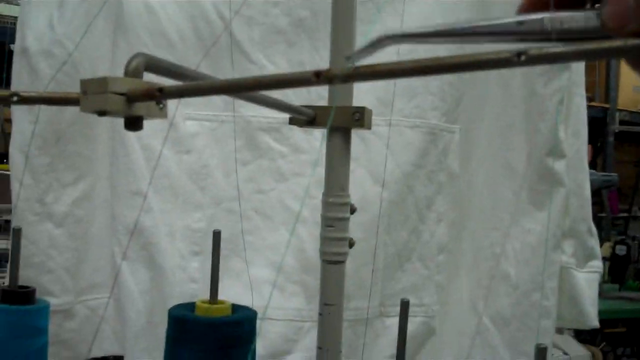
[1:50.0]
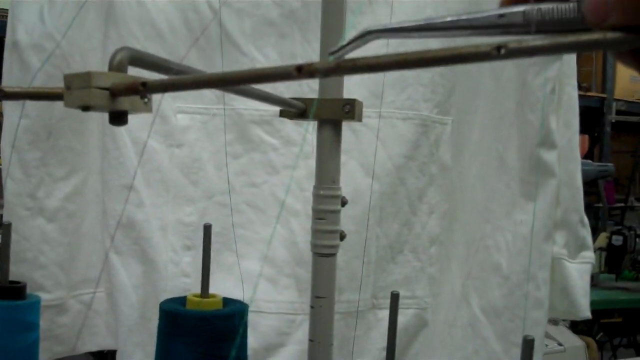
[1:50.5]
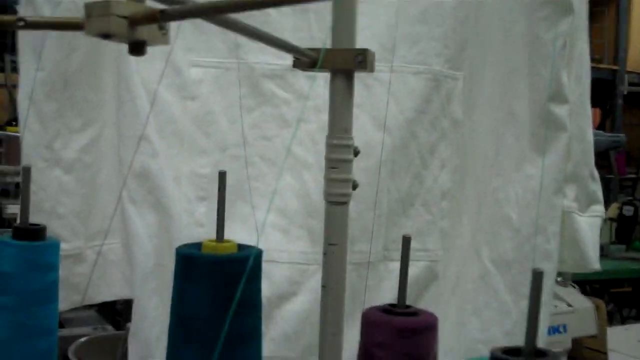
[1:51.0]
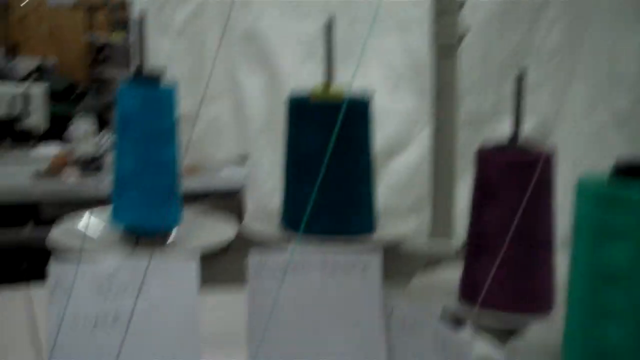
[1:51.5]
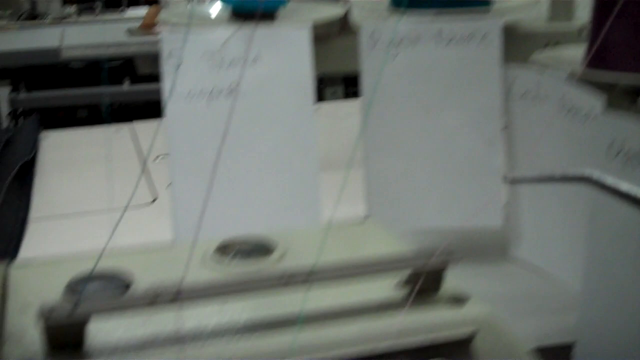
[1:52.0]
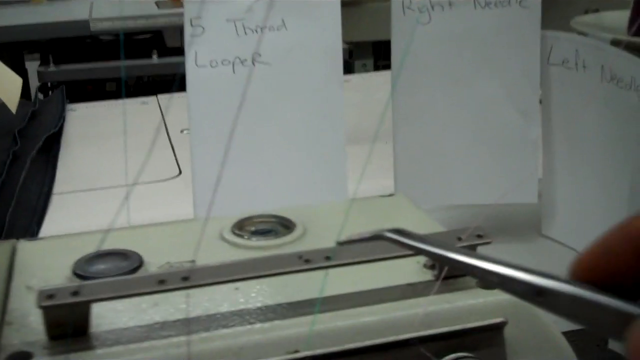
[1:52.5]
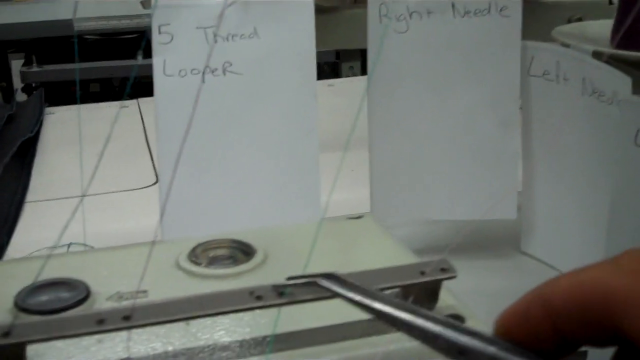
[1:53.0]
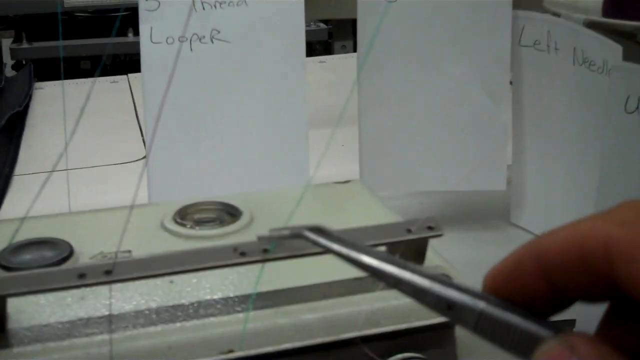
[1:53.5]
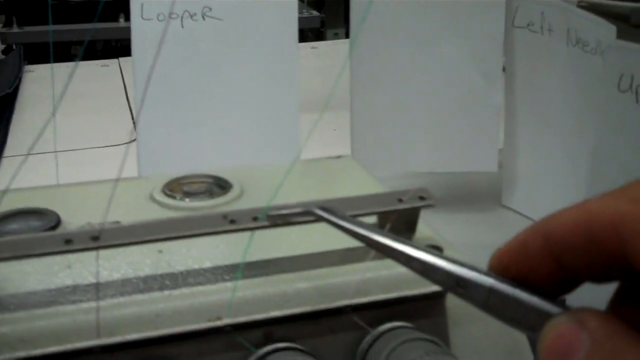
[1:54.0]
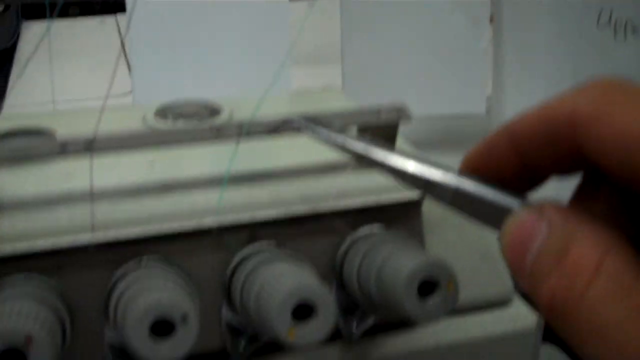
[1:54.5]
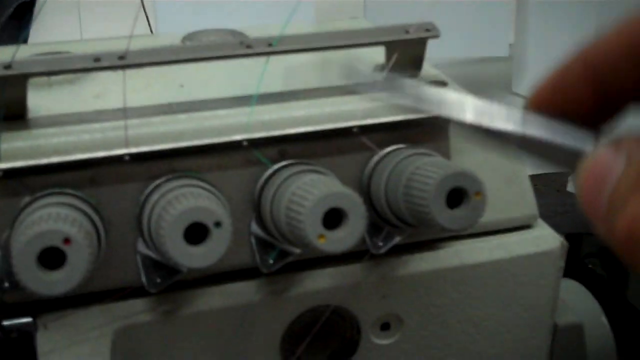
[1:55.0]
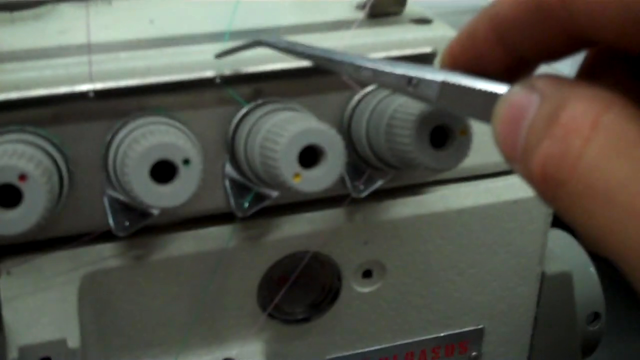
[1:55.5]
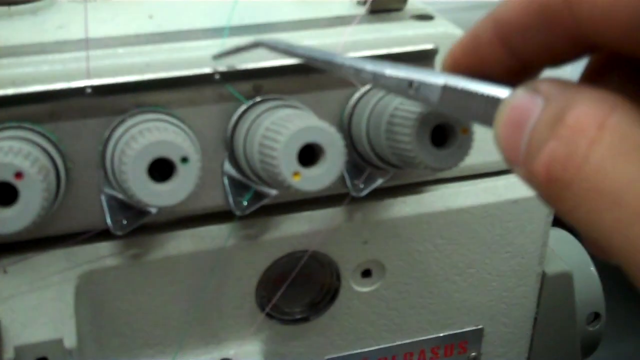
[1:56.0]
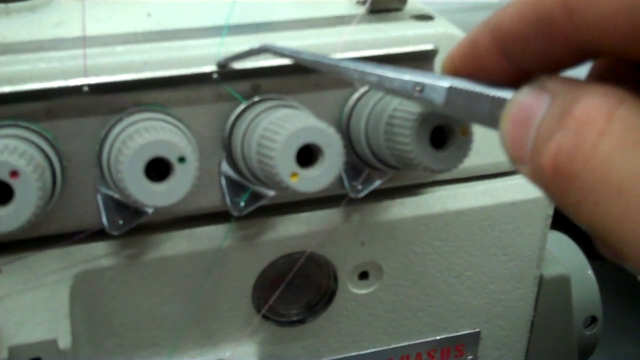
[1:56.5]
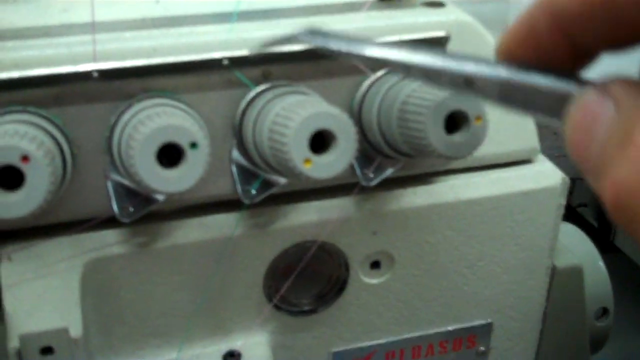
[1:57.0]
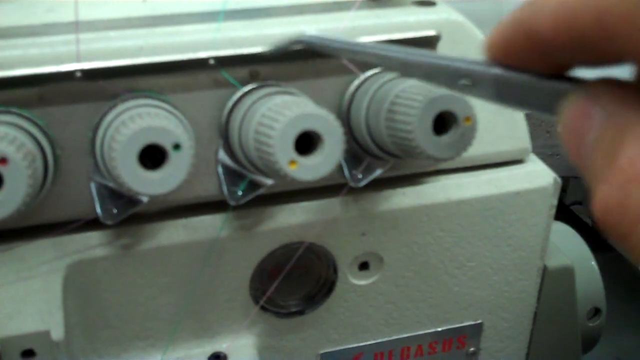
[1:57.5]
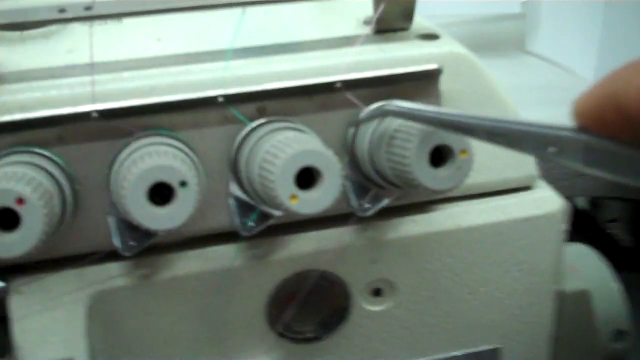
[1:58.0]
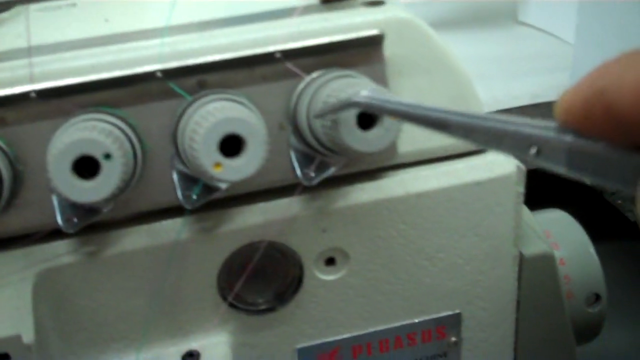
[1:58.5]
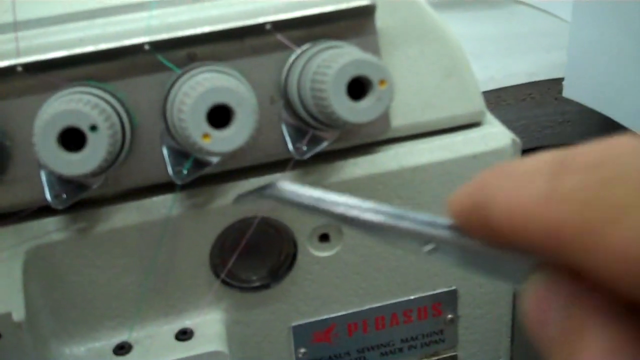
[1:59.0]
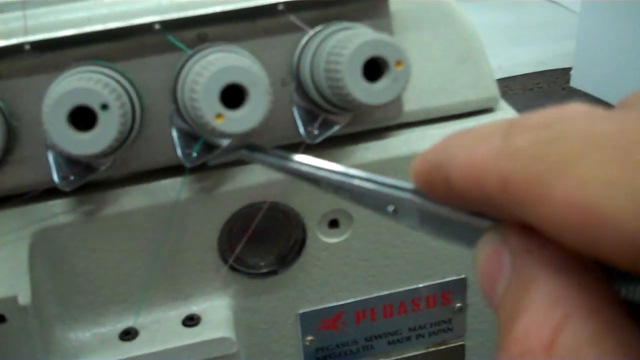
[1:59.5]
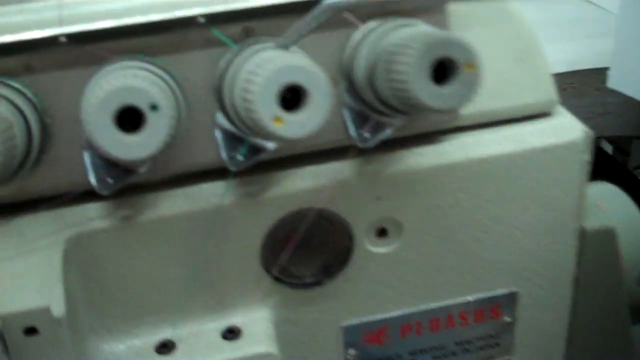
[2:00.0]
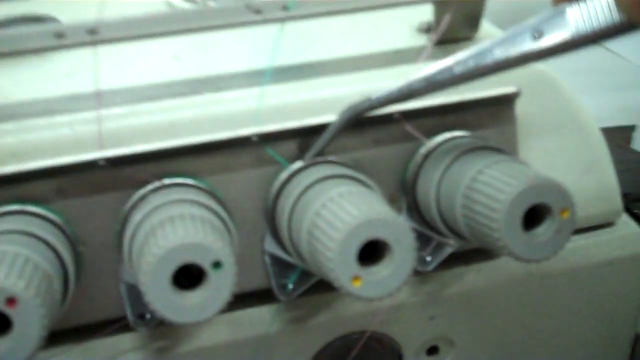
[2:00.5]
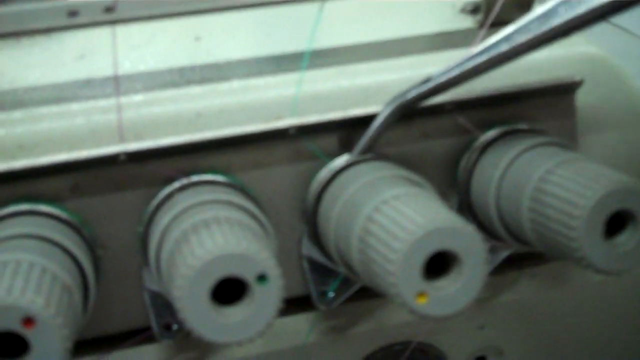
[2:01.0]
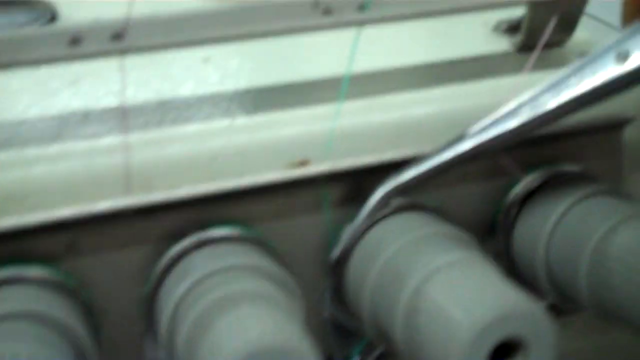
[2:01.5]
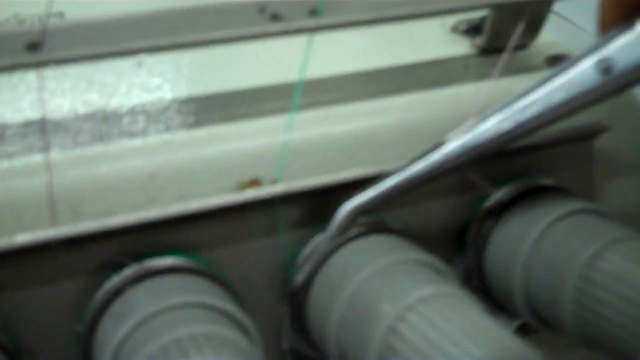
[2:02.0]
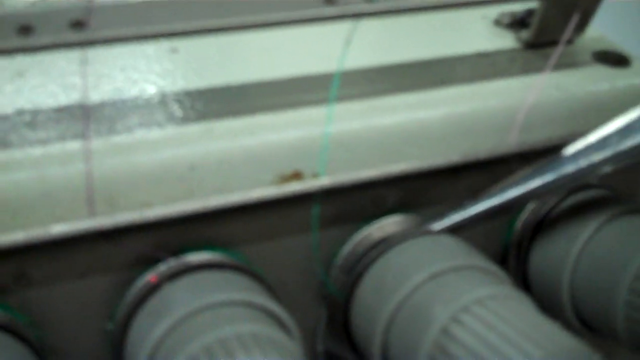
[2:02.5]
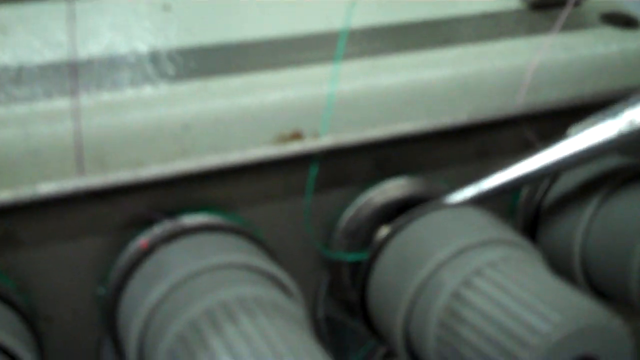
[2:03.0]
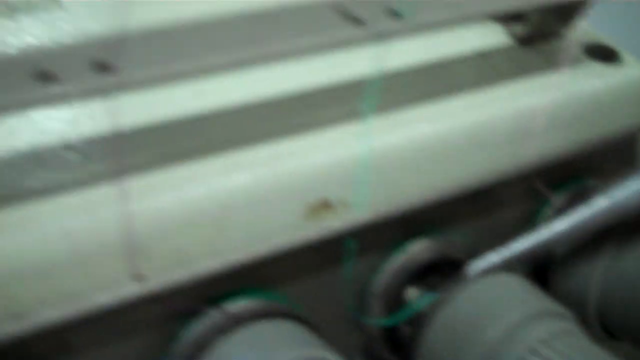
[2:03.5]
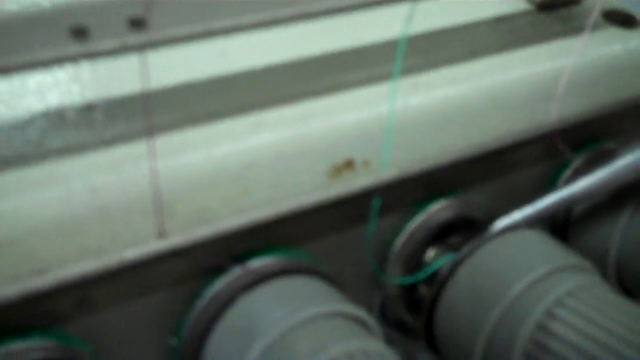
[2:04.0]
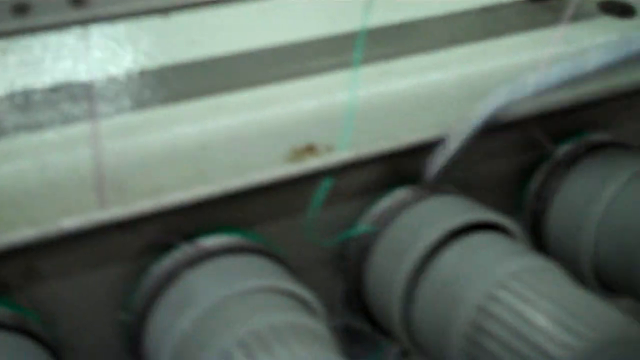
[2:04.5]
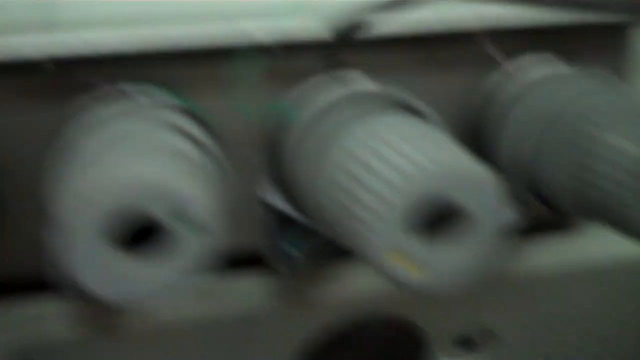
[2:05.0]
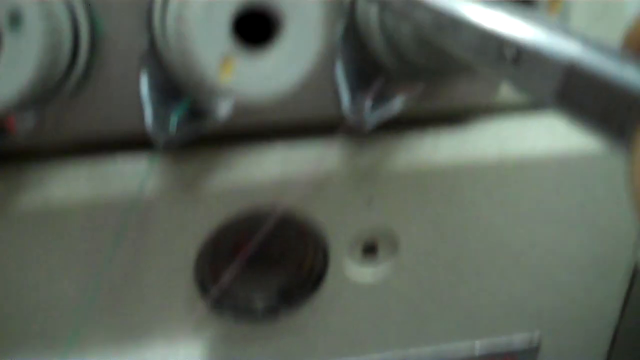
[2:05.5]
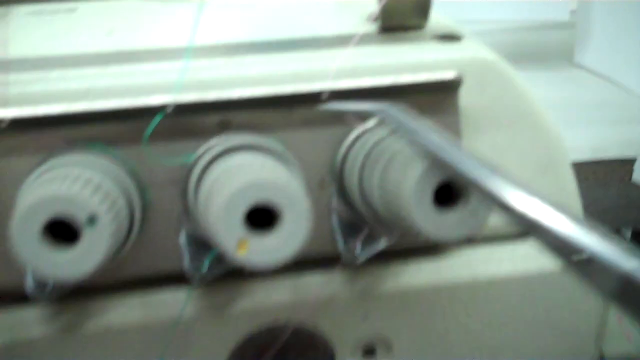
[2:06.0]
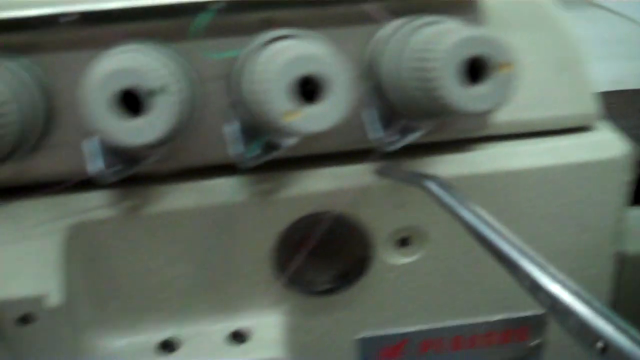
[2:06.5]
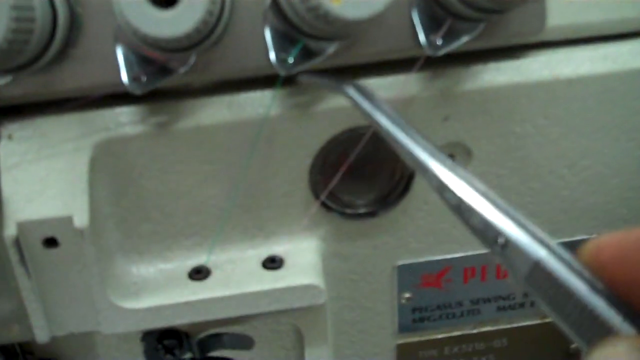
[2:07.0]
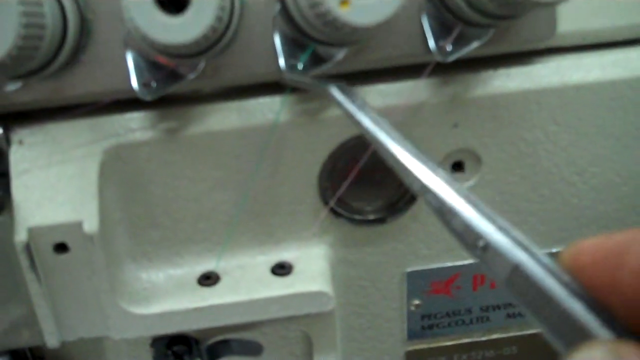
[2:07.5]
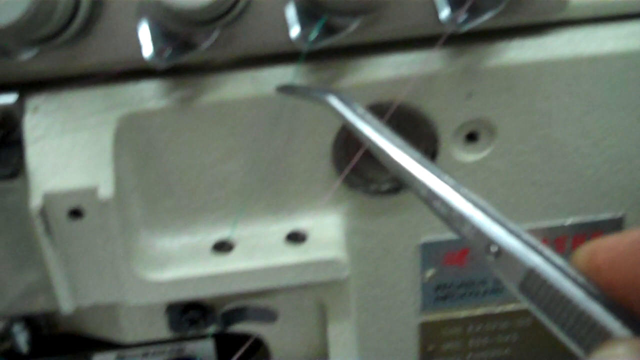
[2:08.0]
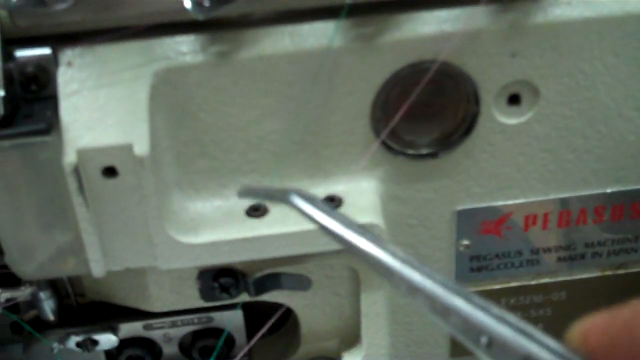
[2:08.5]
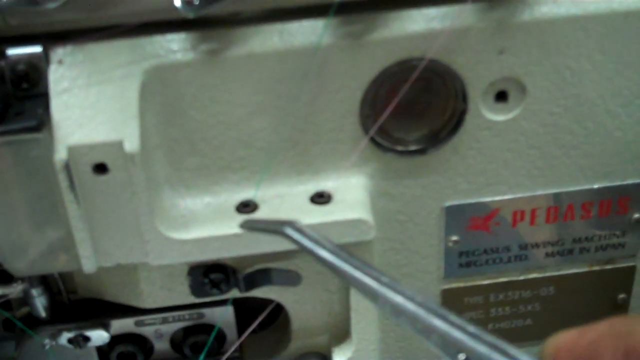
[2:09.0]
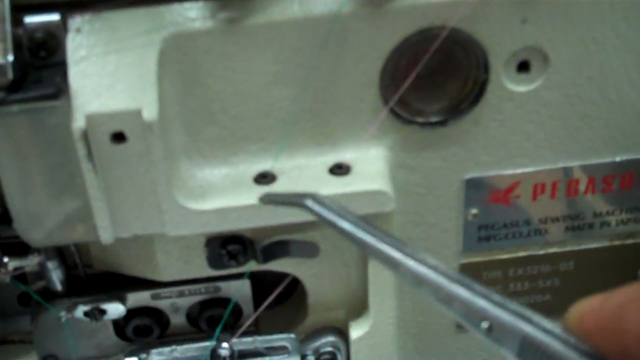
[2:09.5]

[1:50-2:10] Different metal bars are set up with strings of thread attached to them, and a white fabric is draped in the background. Tweezers pull at one of the strings. There are multiple spools of thread in blue, dark green, purple and green, each with a different label underneath, written in black ink on white paper. One label says "five thread looper", another says "right needle", and another says "left needle". The tweezers lower and yank on a green thread attached to a knob; pink thread is attached to the knob to the right of the green one. The path of the green string to a lower spot on the machine is shown.